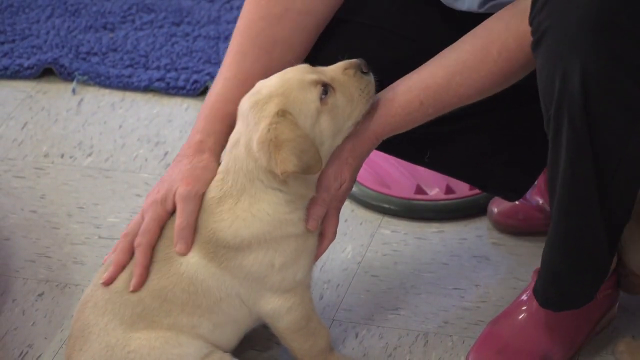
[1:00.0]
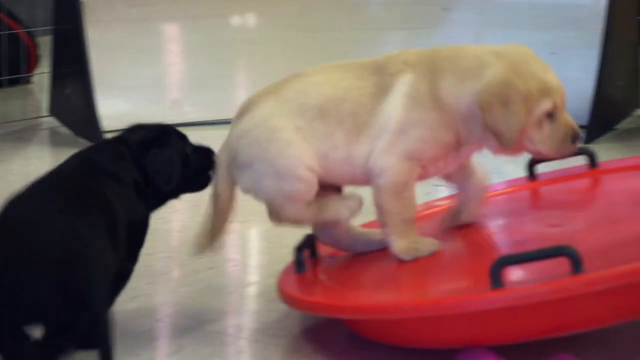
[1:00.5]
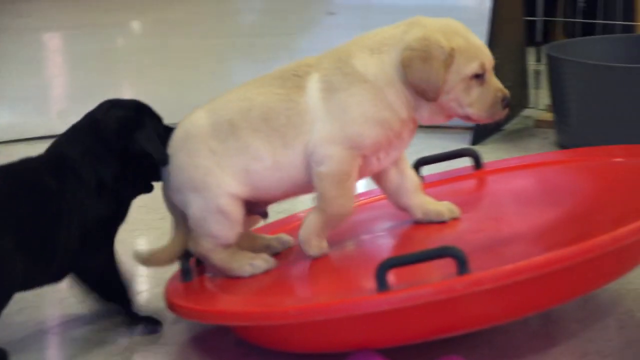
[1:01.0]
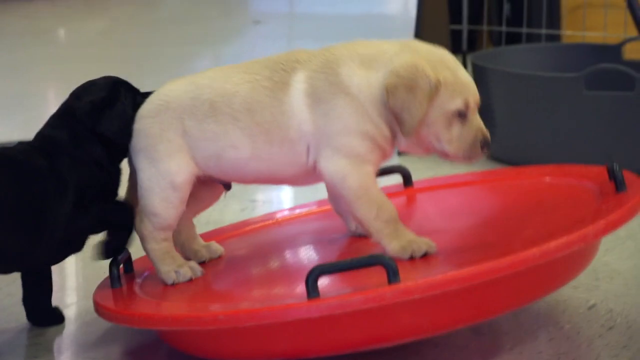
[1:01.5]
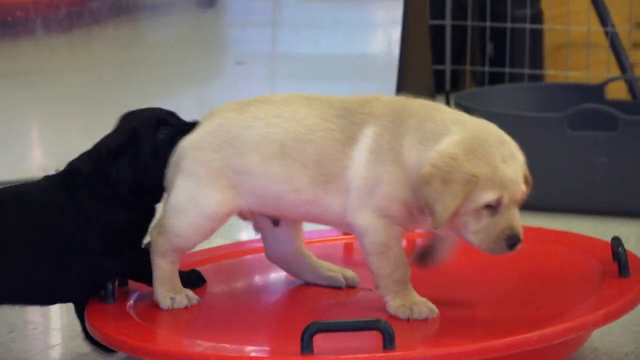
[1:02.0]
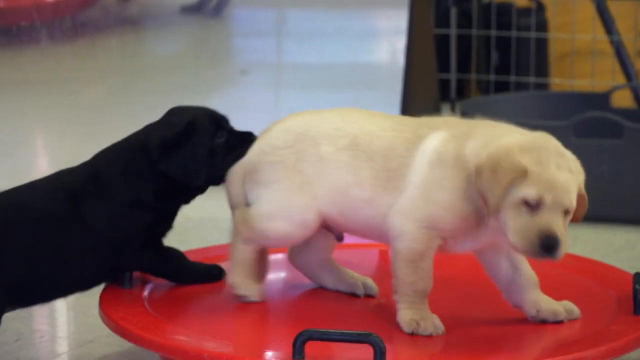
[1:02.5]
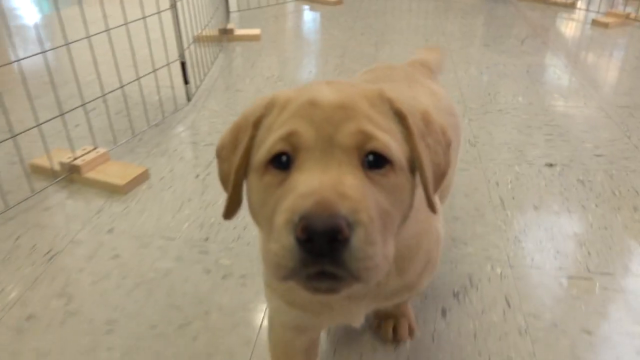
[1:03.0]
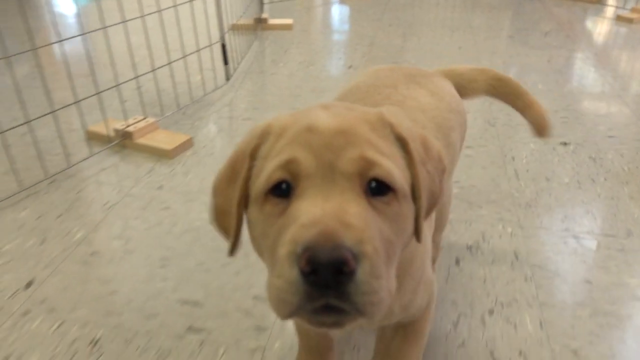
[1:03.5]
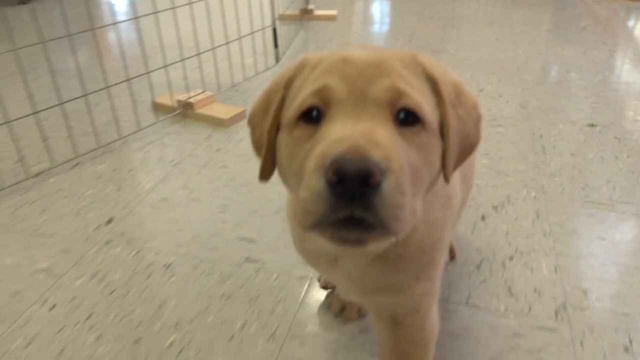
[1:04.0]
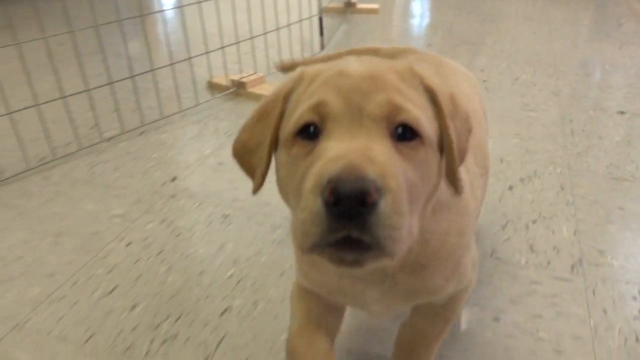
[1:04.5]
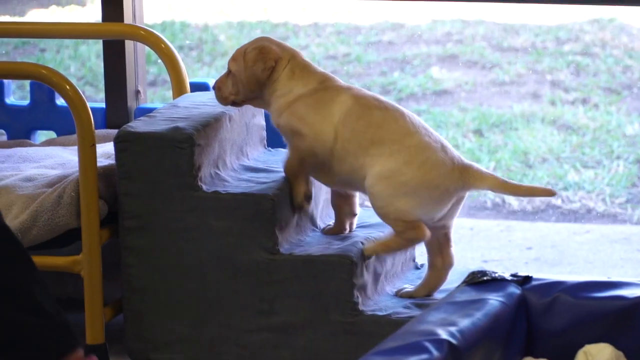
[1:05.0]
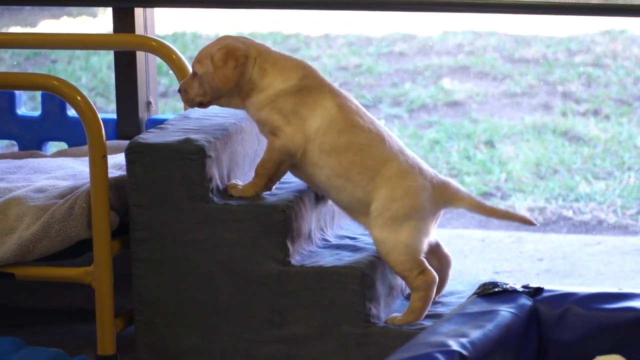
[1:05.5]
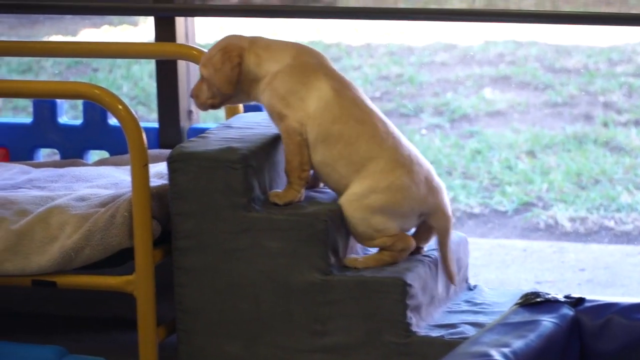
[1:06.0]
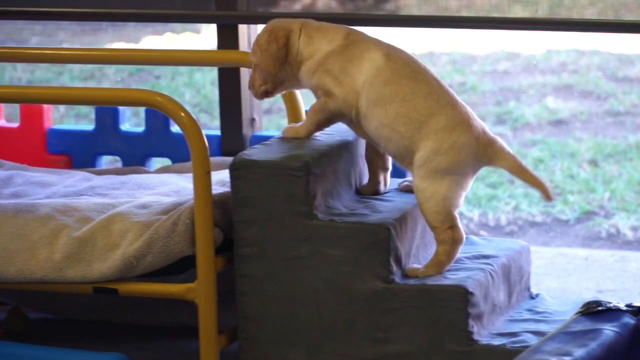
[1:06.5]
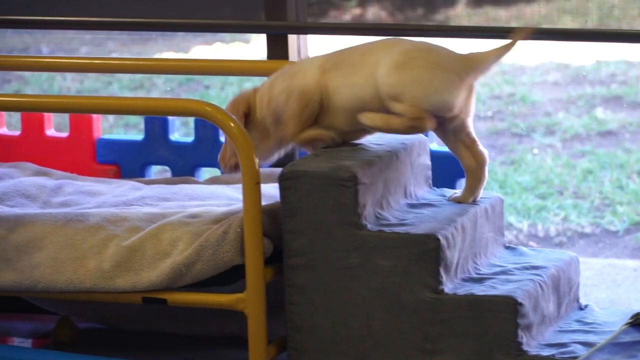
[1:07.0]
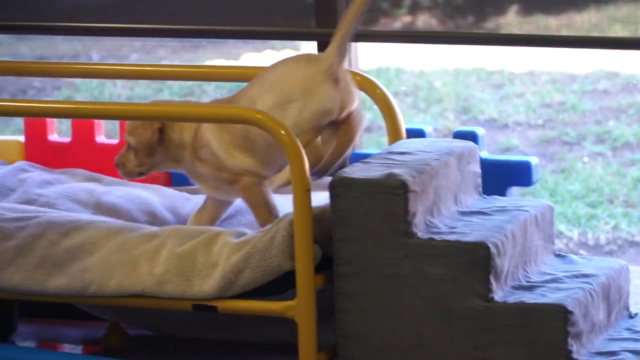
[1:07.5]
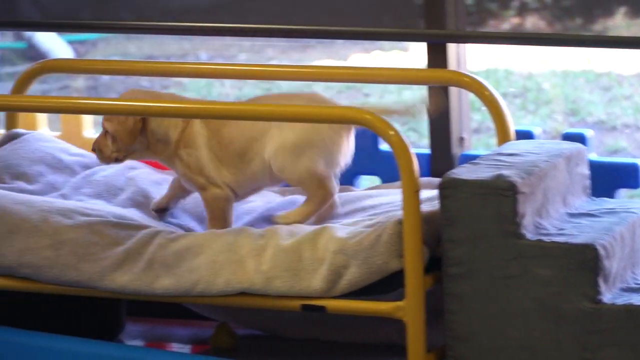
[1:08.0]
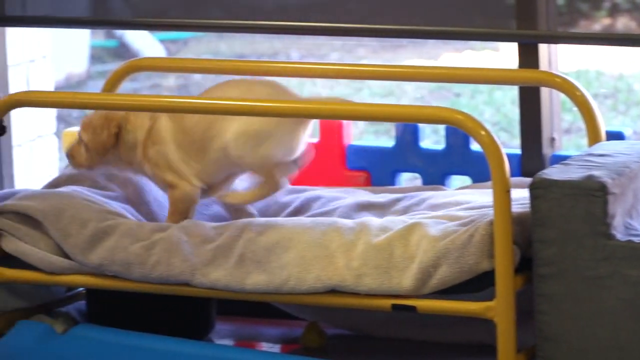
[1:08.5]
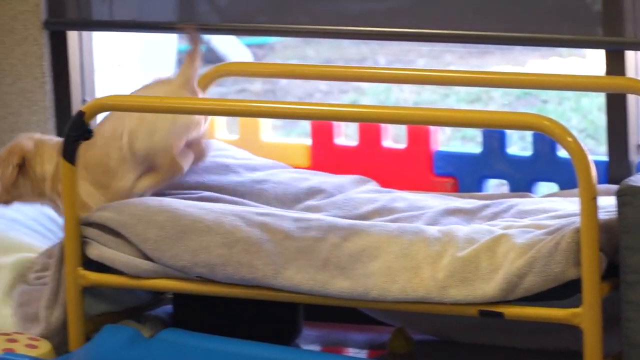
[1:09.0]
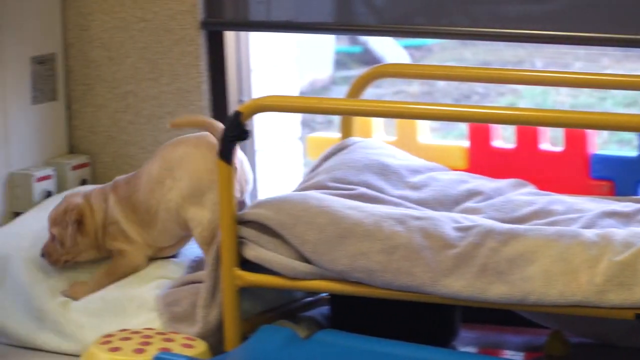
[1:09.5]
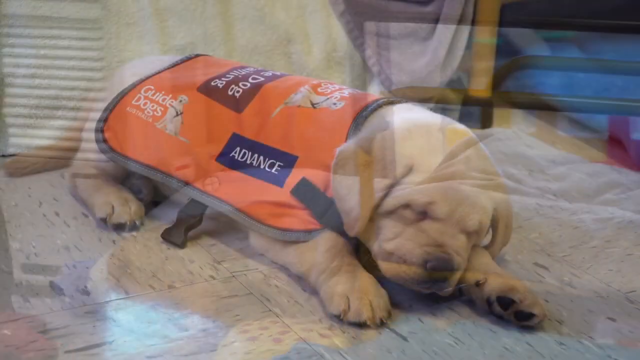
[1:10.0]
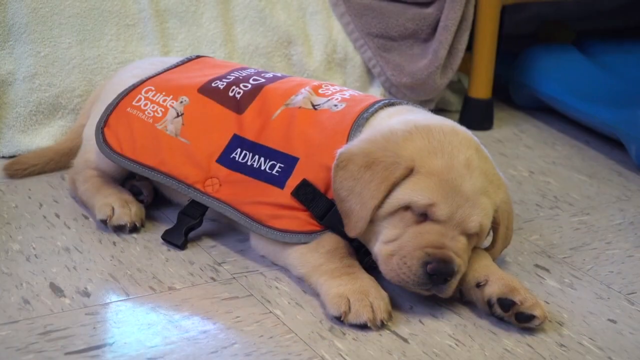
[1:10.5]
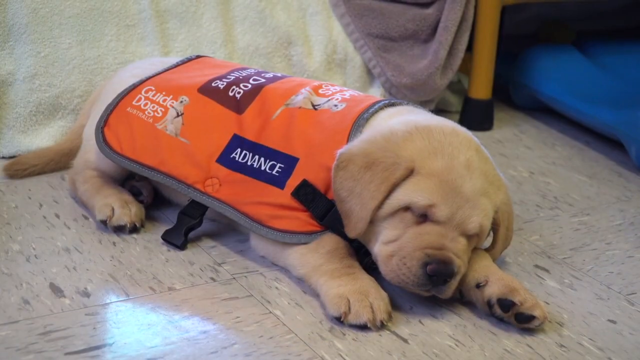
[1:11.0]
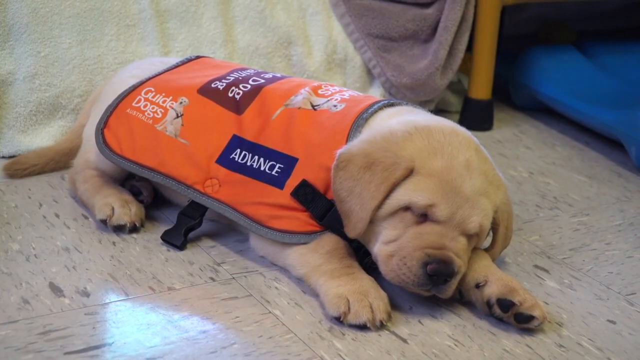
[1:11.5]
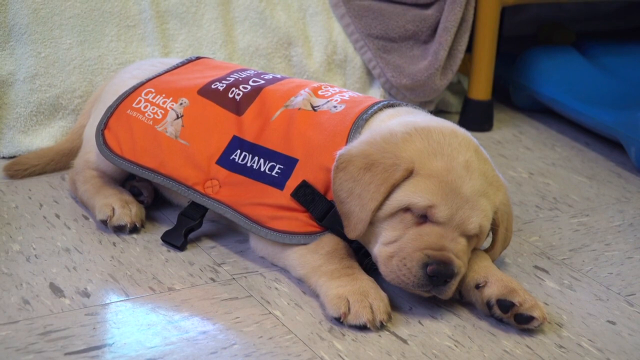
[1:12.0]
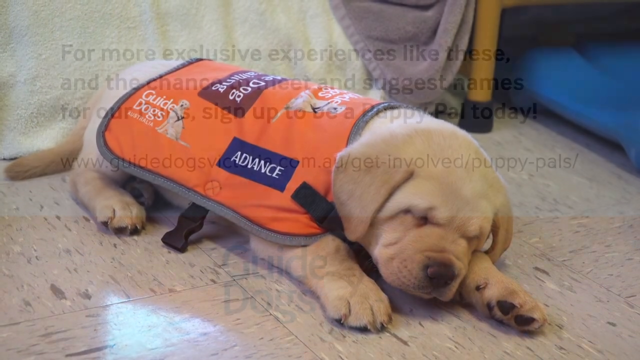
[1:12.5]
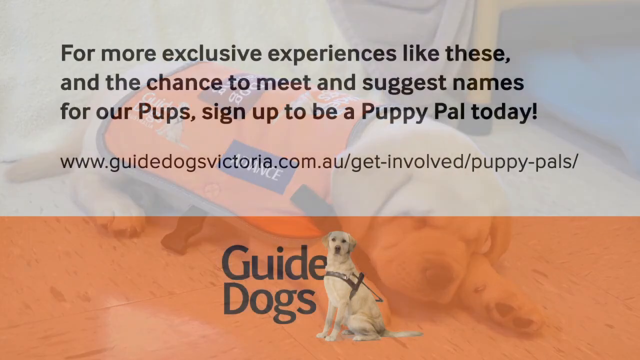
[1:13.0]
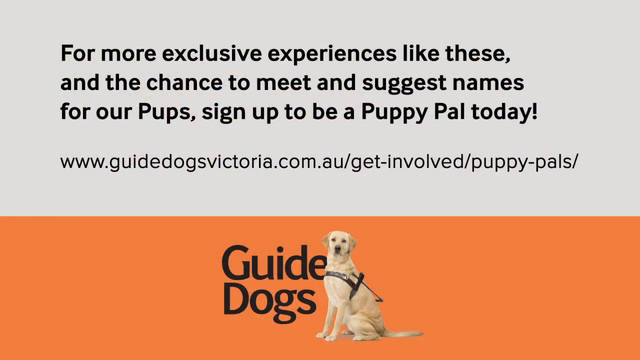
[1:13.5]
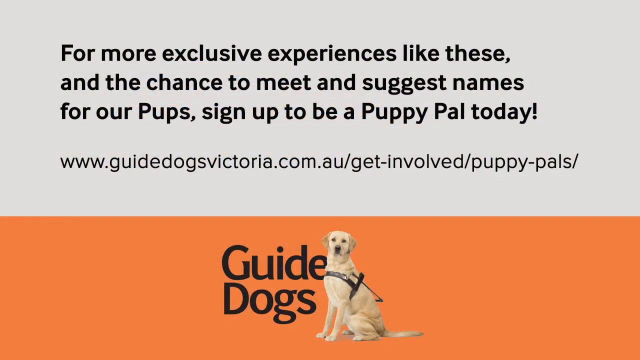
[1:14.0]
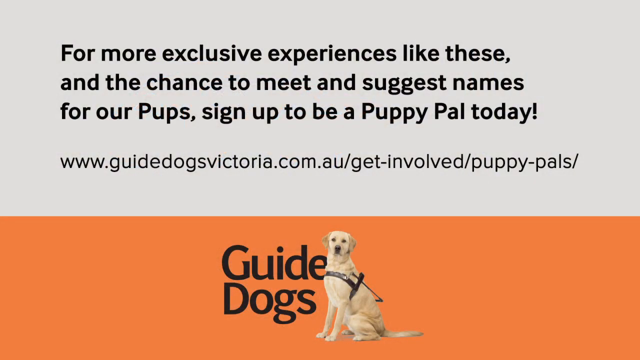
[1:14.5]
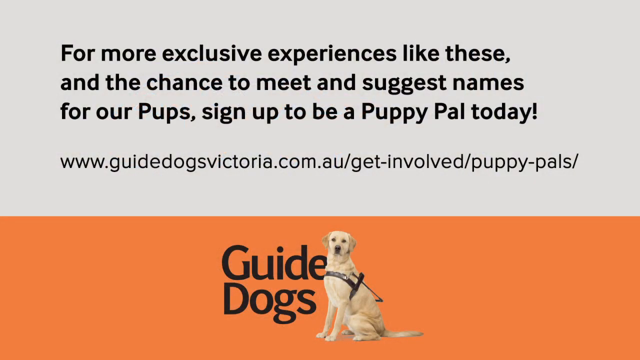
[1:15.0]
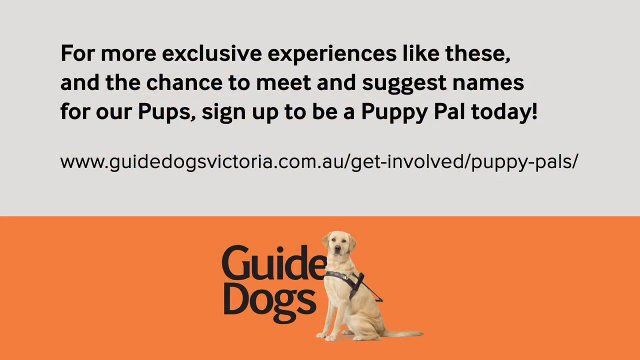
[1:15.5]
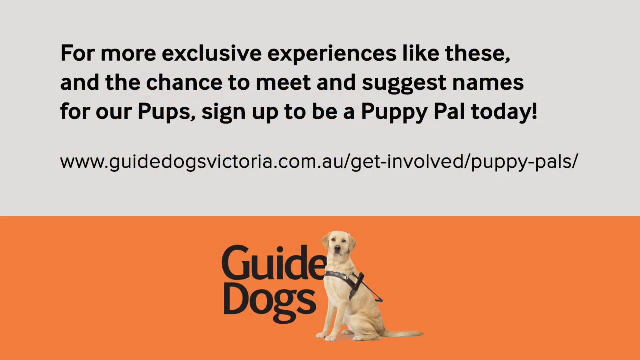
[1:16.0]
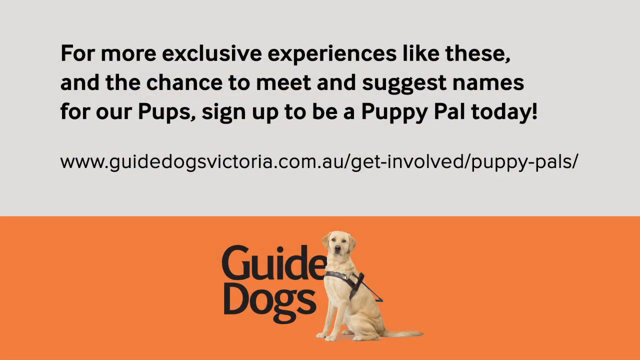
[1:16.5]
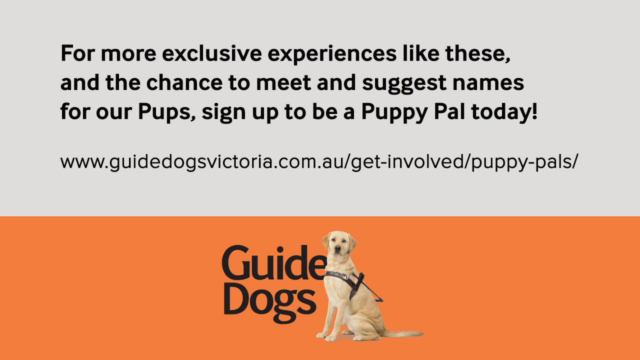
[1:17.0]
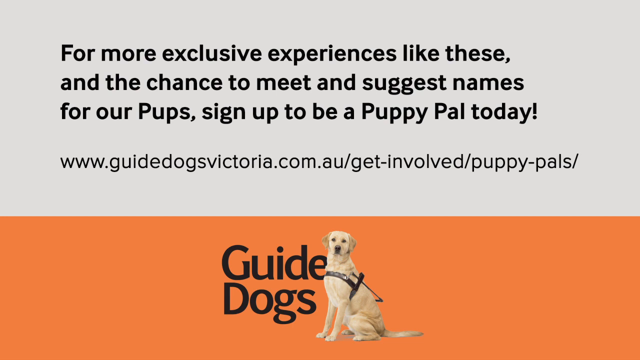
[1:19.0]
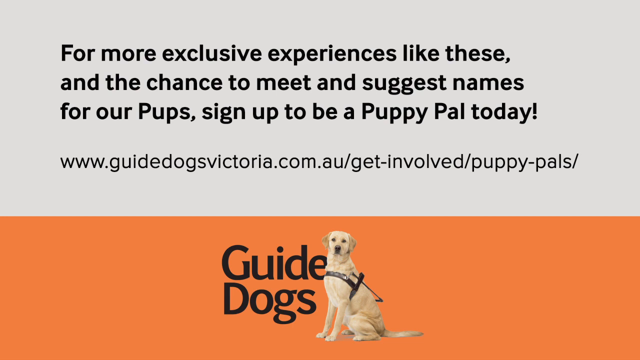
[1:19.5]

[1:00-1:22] The puppy continues to be stroked. A device for practising balance appears: it is like a red disc on springs that moves slightly when the puppies stand on it, so they have to reposition themselves. One of the golden puppies is on the balance disc and the black puppy tries to get on it as well. One of the puppies then moves through the kennels area of the building, practising climbing steps and descending onto a makeshift bed at the top. Next, one of the puppies is asleep wearing the coat that guide dogs in training wear to warn members of the public that it is learning. At the end, a message from the charity that runs the site, Guide Dogs Victoria, invites viewers to sign up to be a puppy pal today to see more exclusive experiences like these, and to meet the puppies and suggest their names.